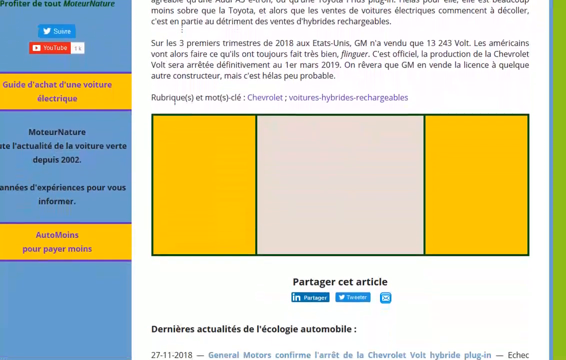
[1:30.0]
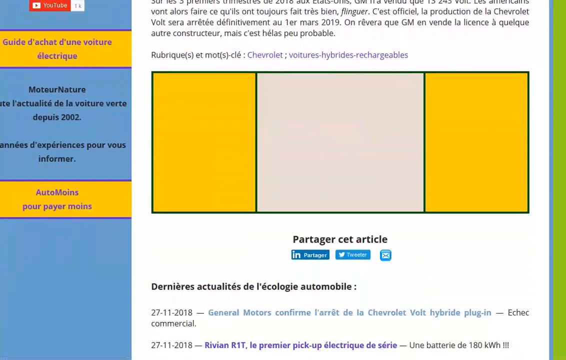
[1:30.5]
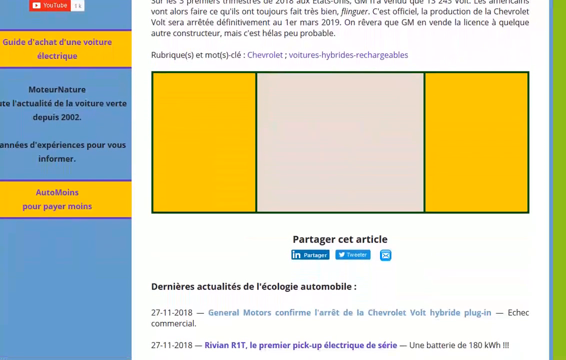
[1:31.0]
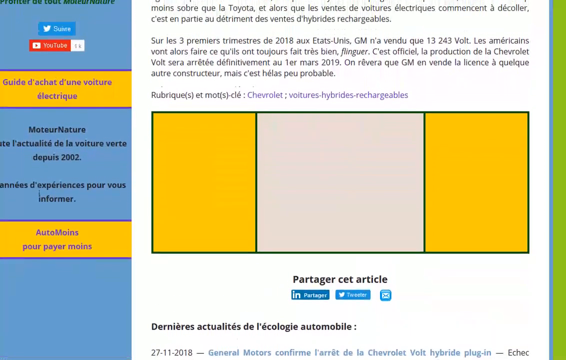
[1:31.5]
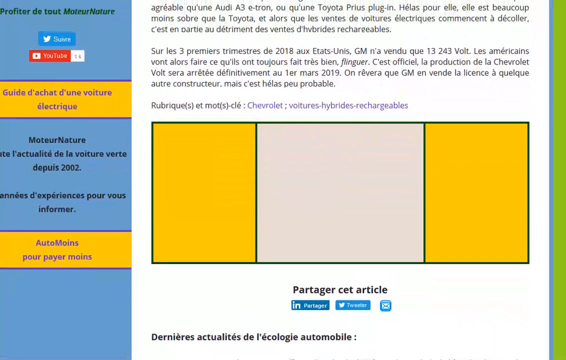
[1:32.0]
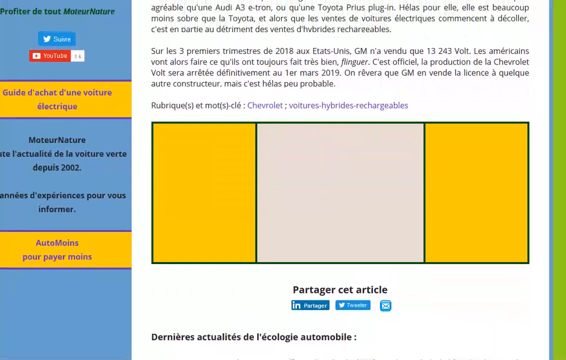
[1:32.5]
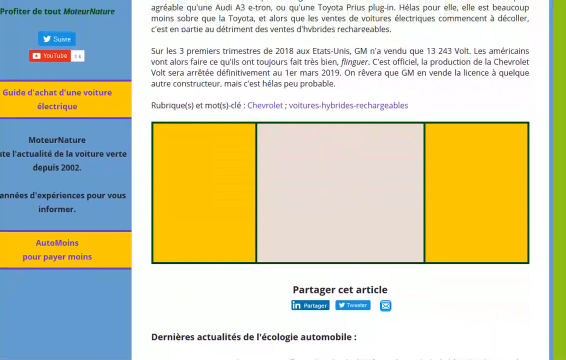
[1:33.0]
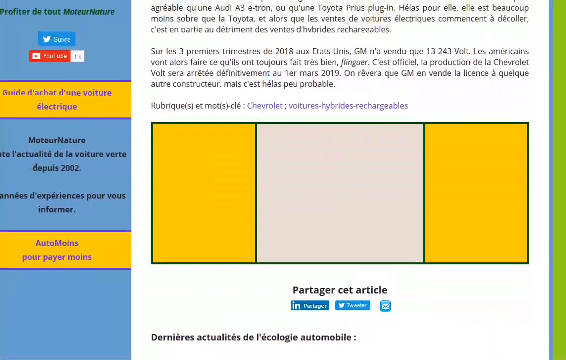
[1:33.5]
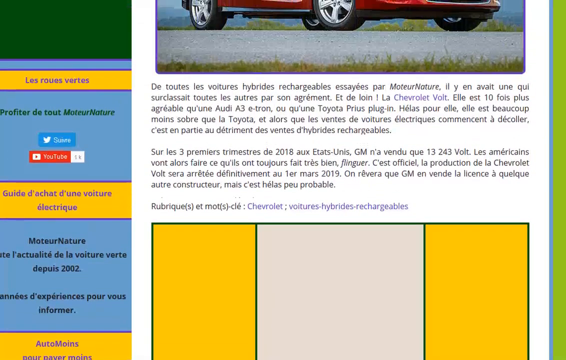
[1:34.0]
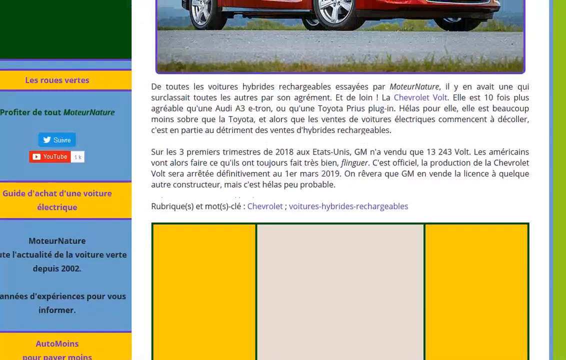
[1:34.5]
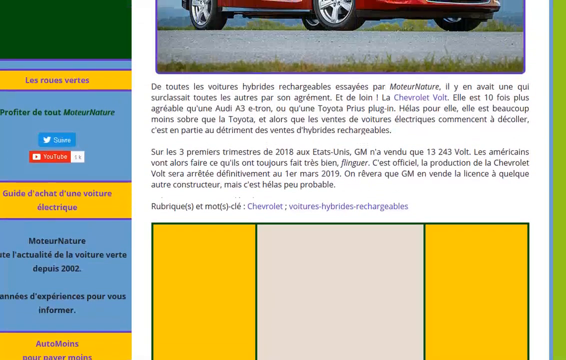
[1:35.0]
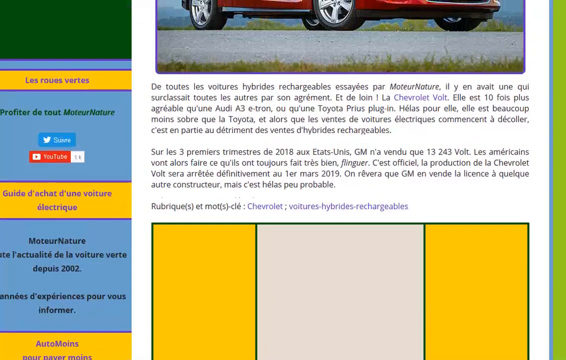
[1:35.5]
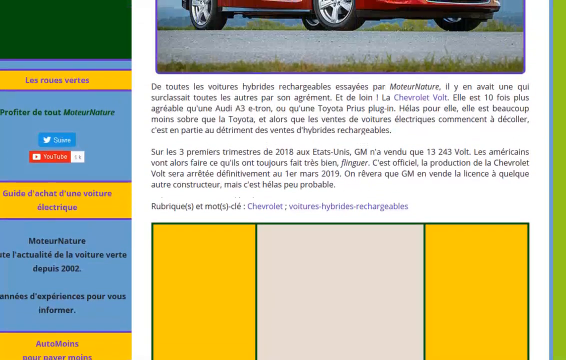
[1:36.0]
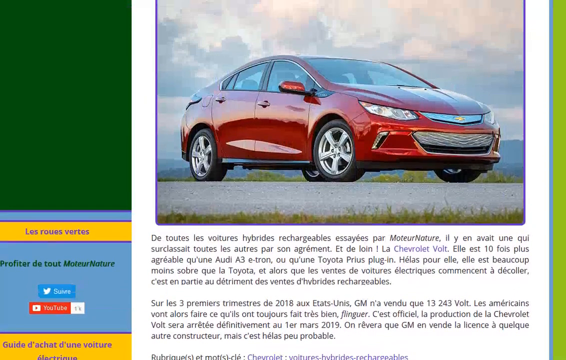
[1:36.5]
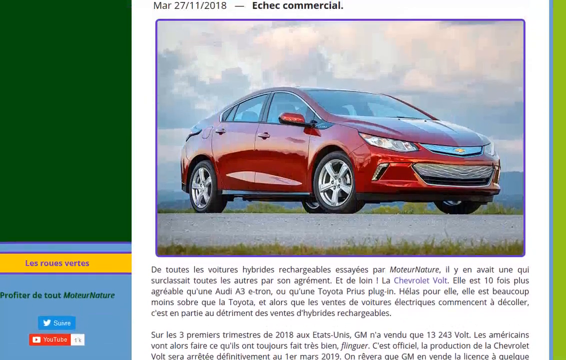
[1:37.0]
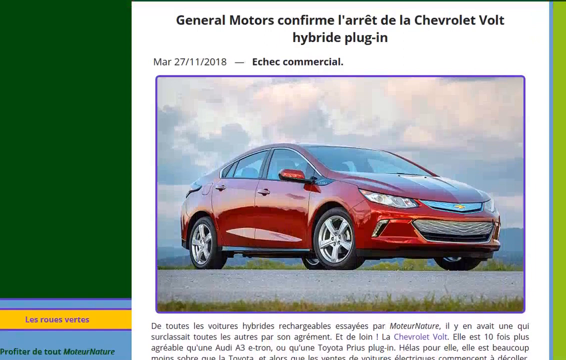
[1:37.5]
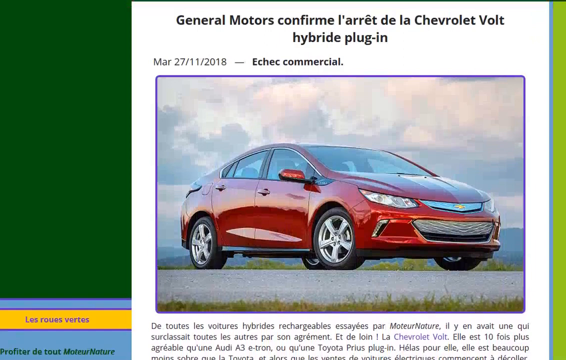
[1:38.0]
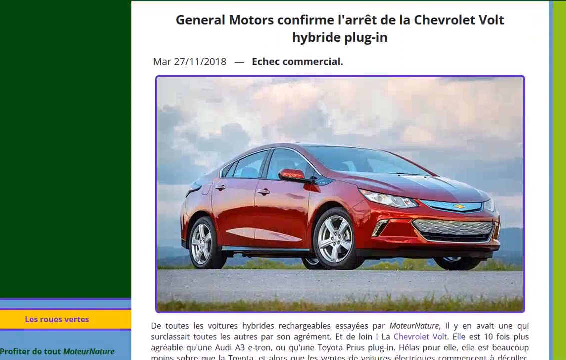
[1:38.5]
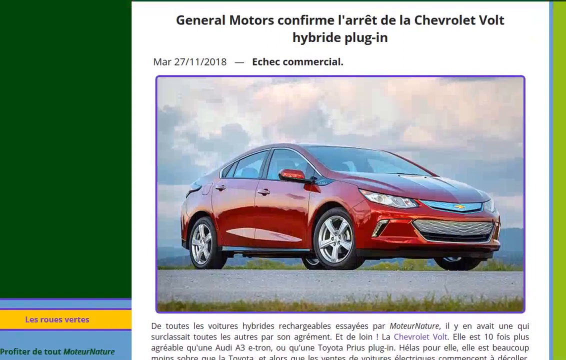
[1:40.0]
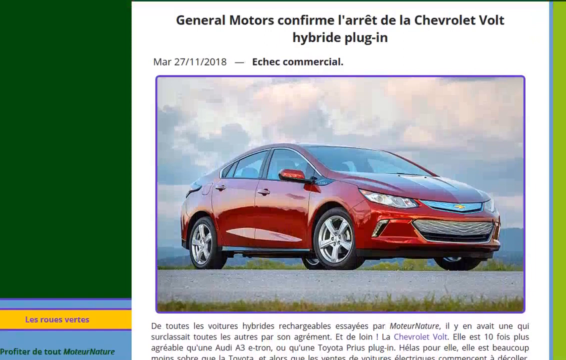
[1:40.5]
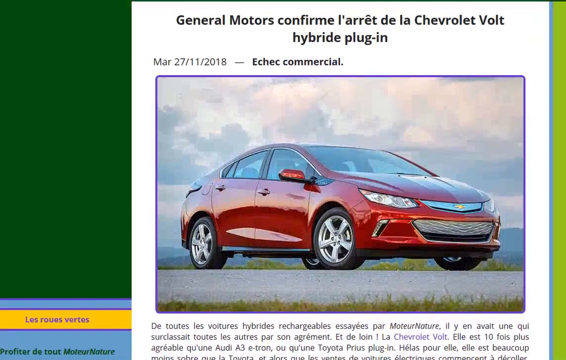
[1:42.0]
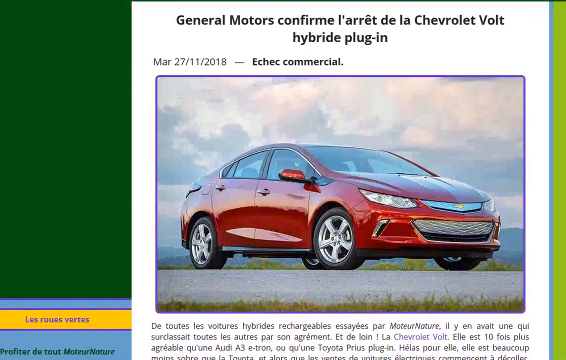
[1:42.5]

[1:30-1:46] The view scrolls upward to show the car again, along with the full title of the page and the picture of the car. The car is dark red, very shiny and brand new, with shiny headlights and a shiny grille. It is a four-door car, with the gasoline door visible on the back of its right side. The windows are not tinted; they are clear and can be seen through. There are no people in the image. In the background is a mountain range, with white clouds in the sky above the car, and the car is parked on light gray ground. At the top left there is a date in number format, showing the 27th of November, 2018. The page has a dark green background on the left and a very thin lime green background on the right.